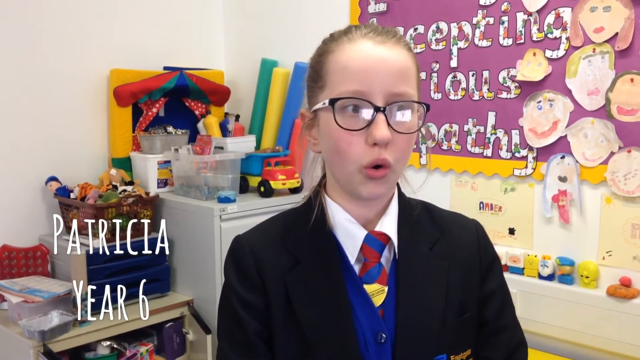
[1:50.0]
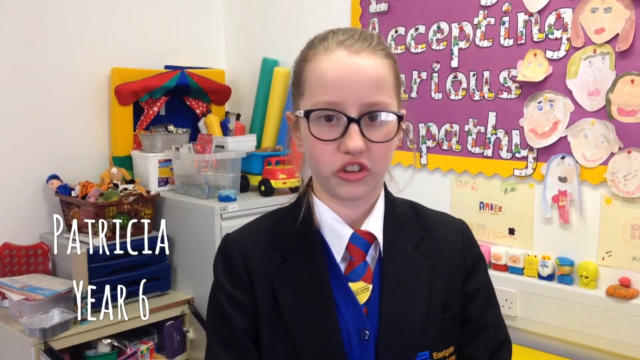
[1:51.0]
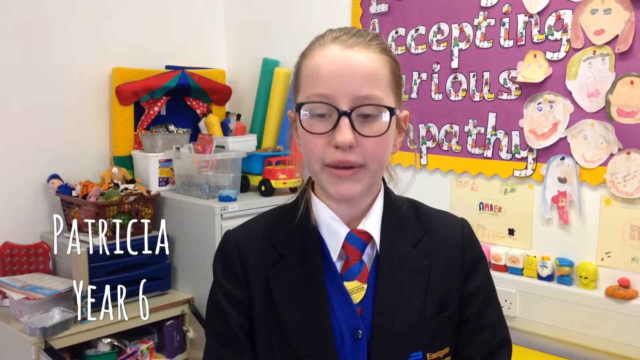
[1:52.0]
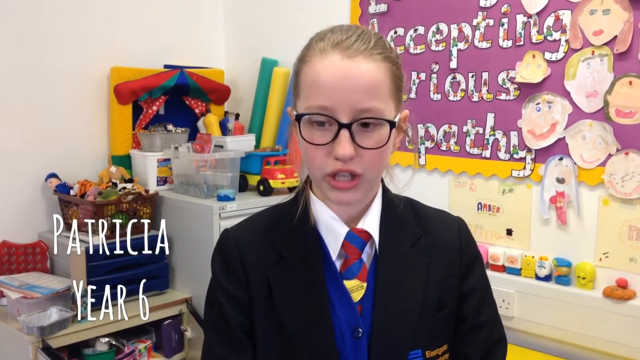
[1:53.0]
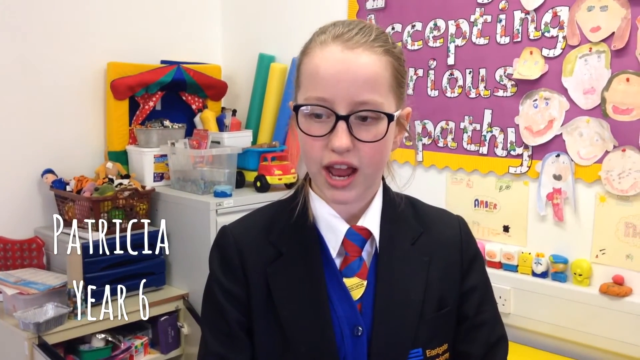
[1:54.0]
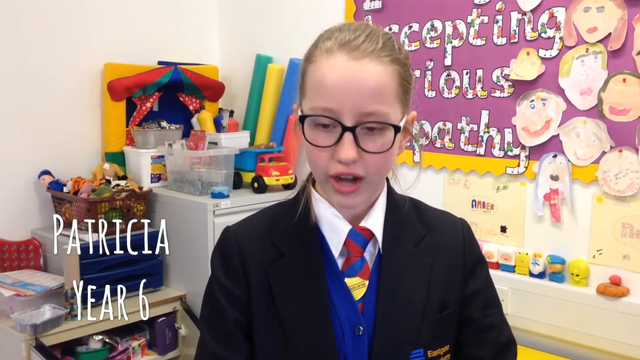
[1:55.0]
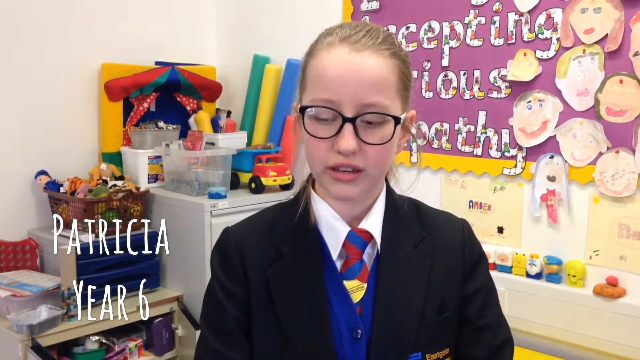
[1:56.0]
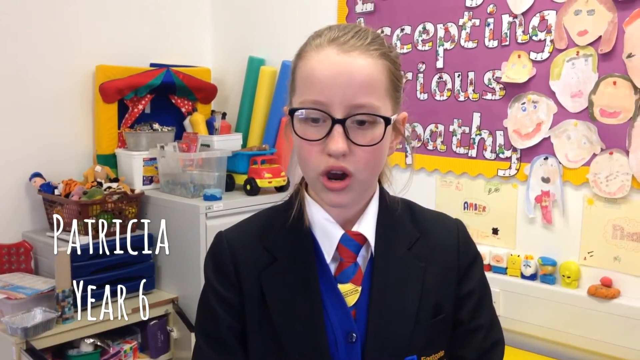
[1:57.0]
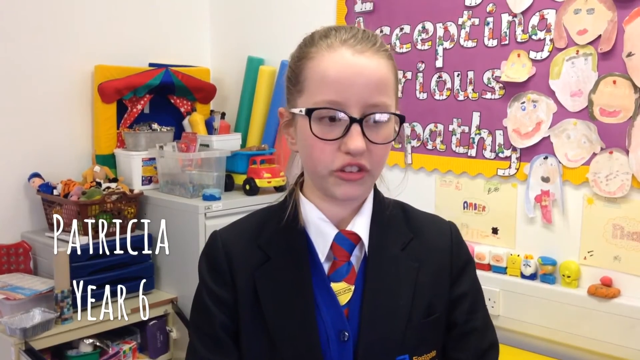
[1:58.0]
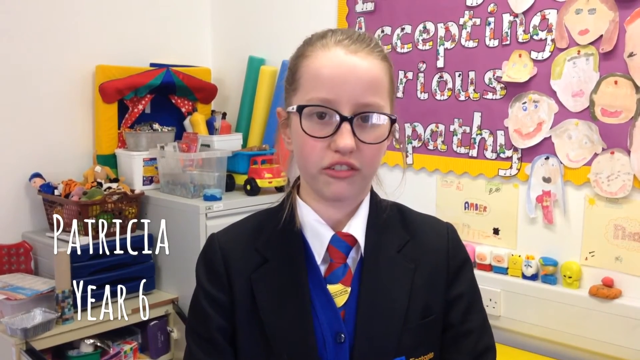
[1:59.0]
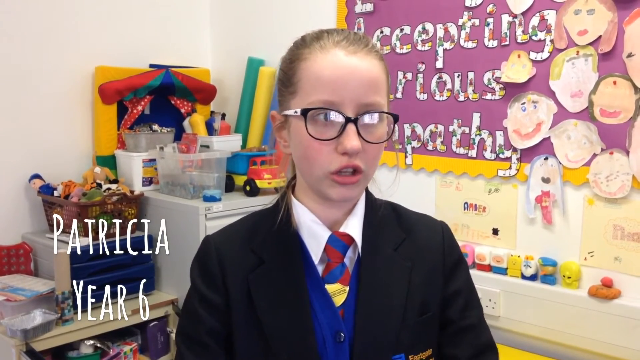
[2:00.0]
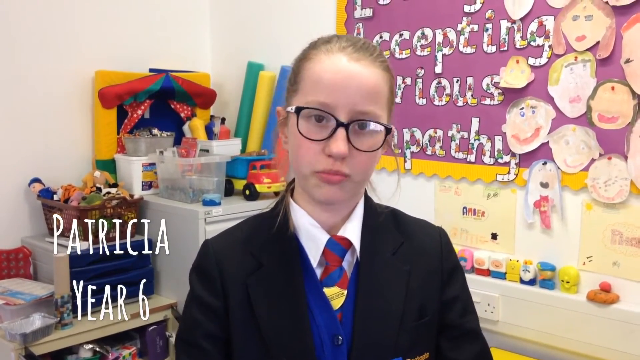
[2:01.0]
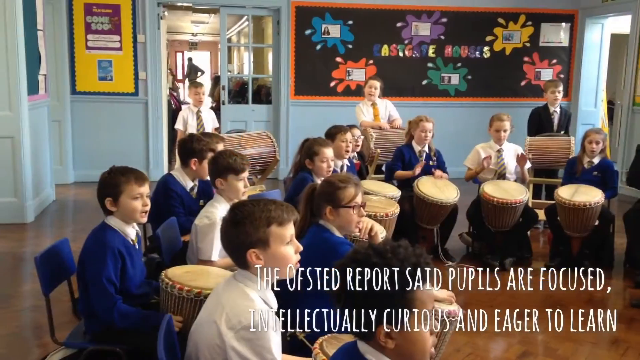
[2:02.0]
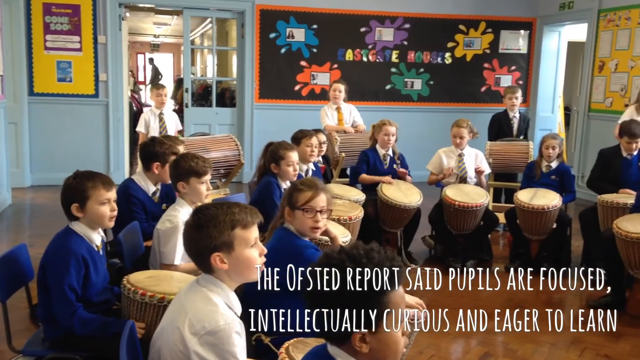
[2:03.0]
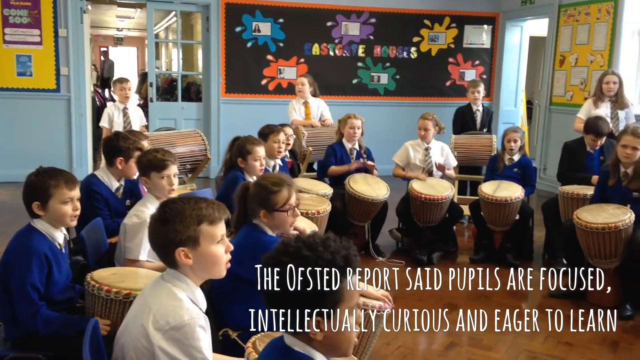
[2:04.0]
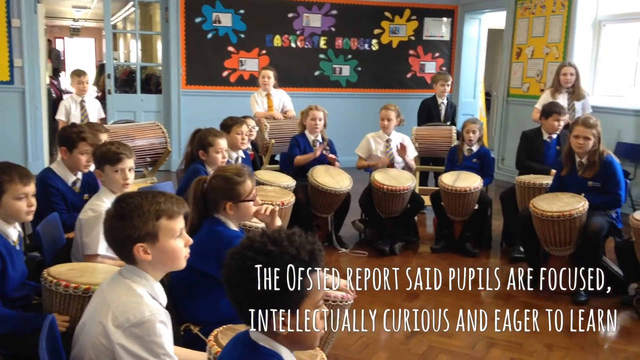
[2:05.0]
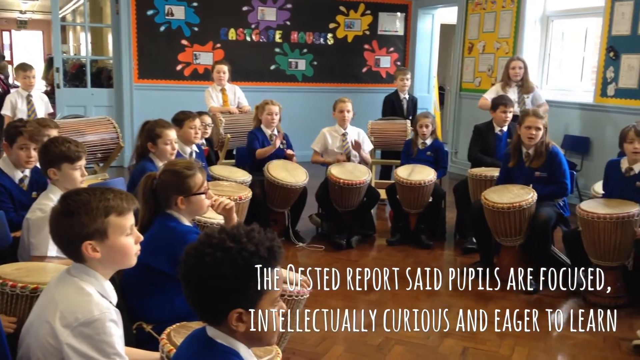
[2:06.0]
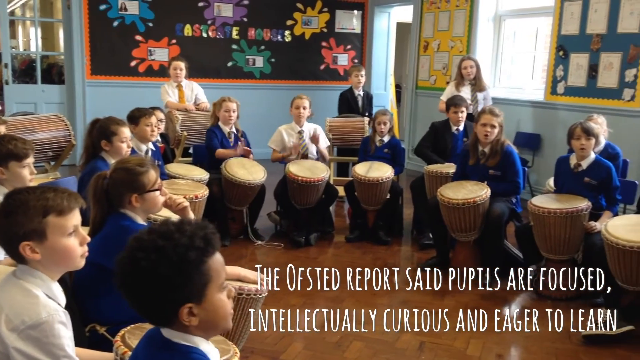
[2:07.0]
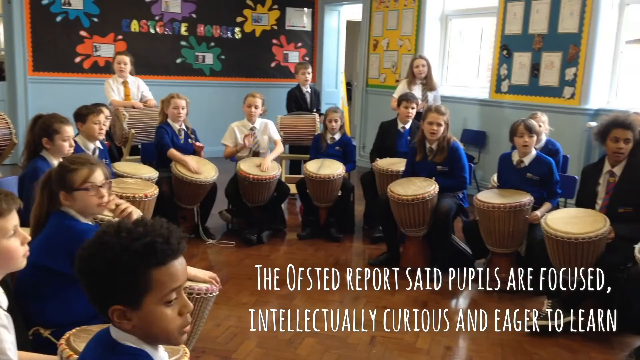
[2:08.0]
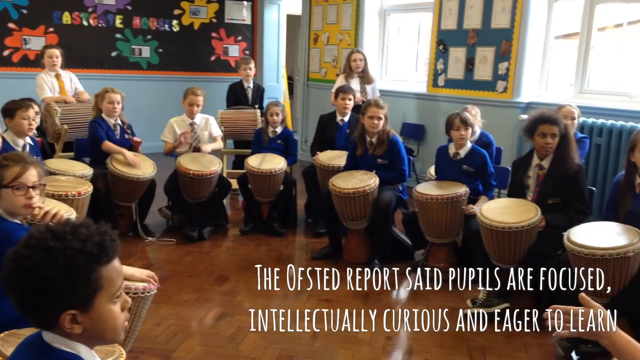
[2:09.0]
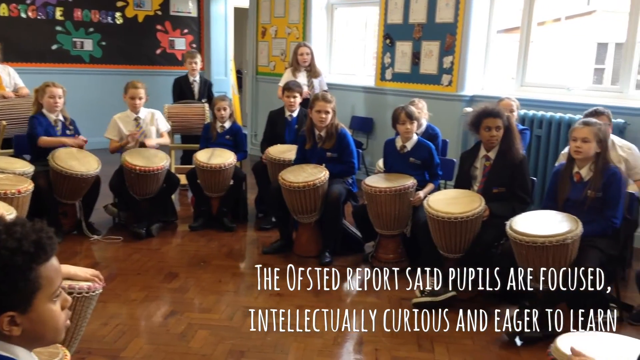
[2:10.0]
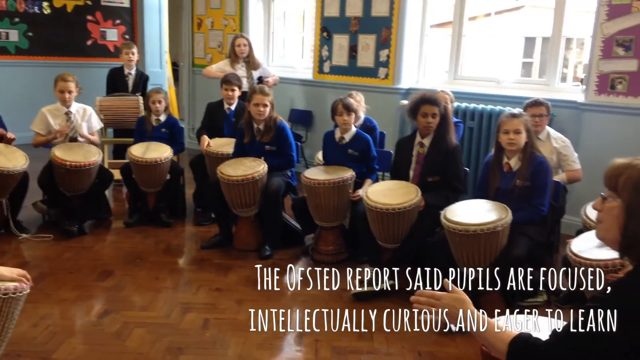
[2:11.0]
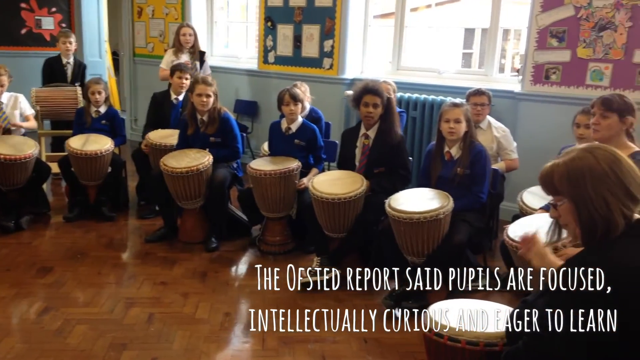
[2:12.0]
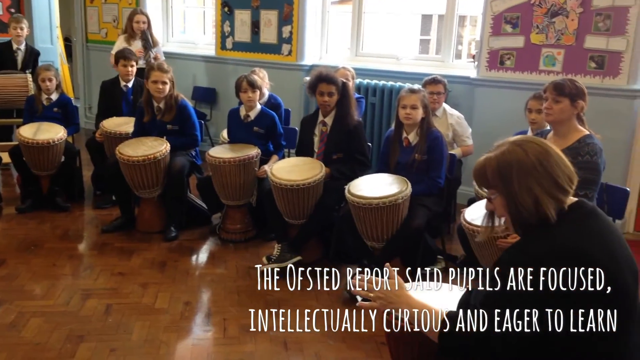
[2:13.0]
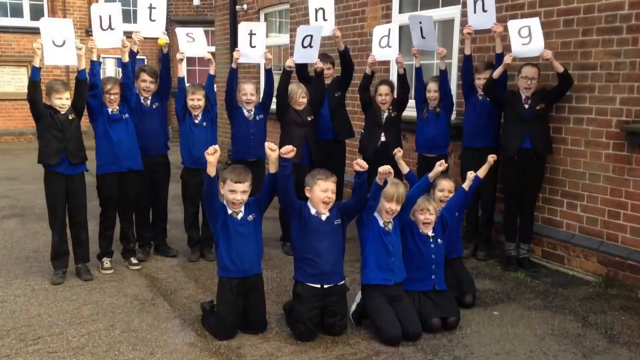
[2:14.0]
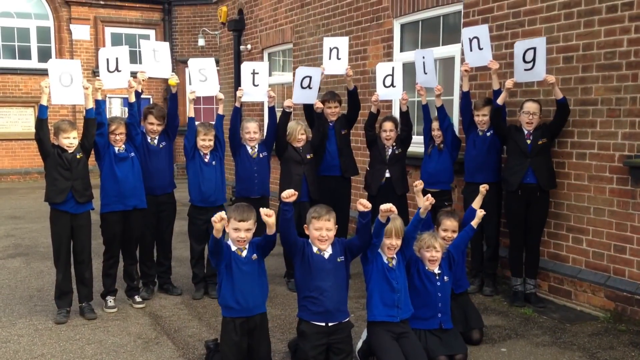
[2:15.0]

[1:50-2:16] The girl keeps talking, glancing a little to the right and then looking forward. She looks very confident as she talks. She looks down and straight ahead, as if really thinking about what she is saying, moves slightly to the right and looks up. The video cuts to kids in a classroom playing little drums that are hit with the hands. They start at the bottom and form a circle going off the right side and near the left side. About a quarter of the way over, a little boy walks through a door, with a couple of people visible through the doorway in the distance. On the back wall is a blackboard with kind of splat-looking shapes: blue, purple and yellow in the top row, and orange, green and pink in the bottom row, with pictures of kids on them that cannot really be made out. Text appears in the bottom right as the camera pans right. The two little girls in the center are the only ones hitting the drums at this point, and they are really into it. As the camera keeps panning, a couple more kids beat on the drums while others just sit there. A teacher in the bottom right corner moves her hands around, waving them. The video cuts to kids outside the brick building. A back row of kids holds up letters spelling out "outstanding". Five kids in front of them are on their knees with their hands straight above their heads, screaming as if celebrating, and the two on the left drop their hands.